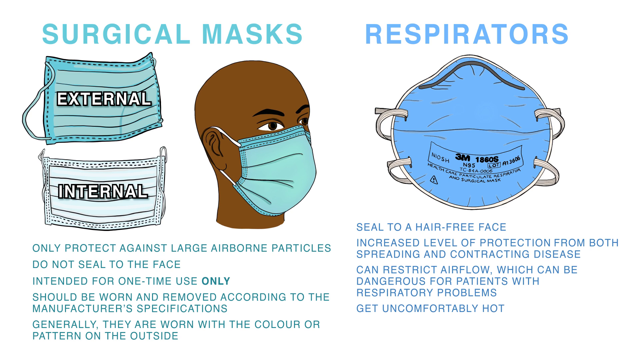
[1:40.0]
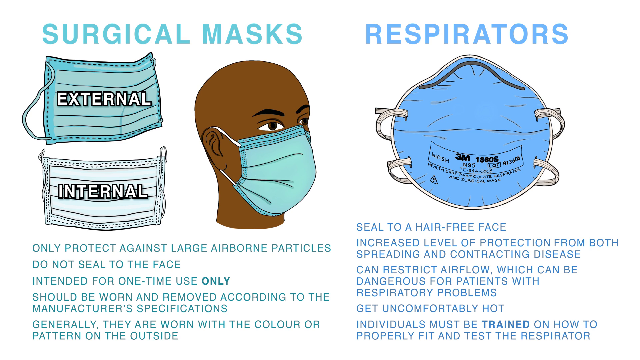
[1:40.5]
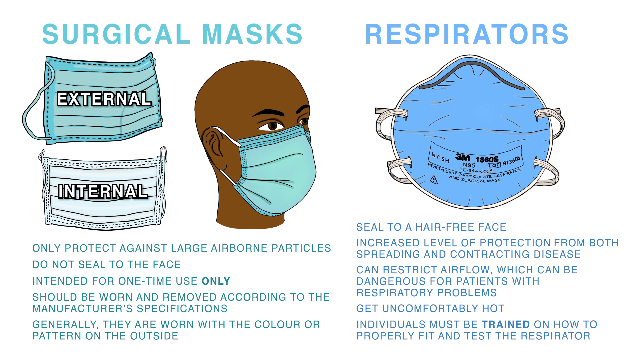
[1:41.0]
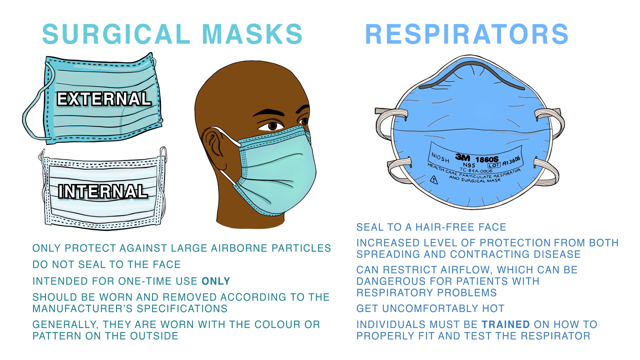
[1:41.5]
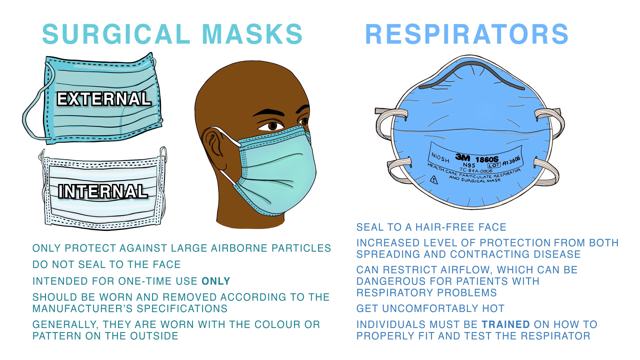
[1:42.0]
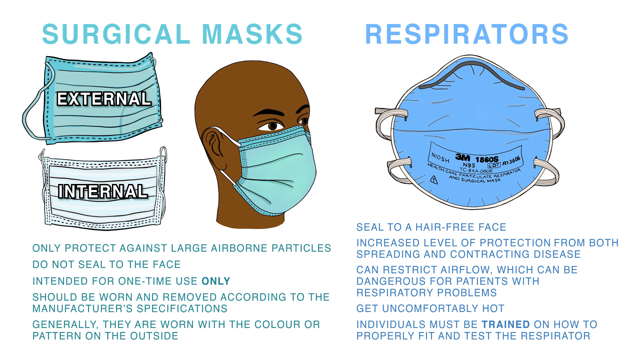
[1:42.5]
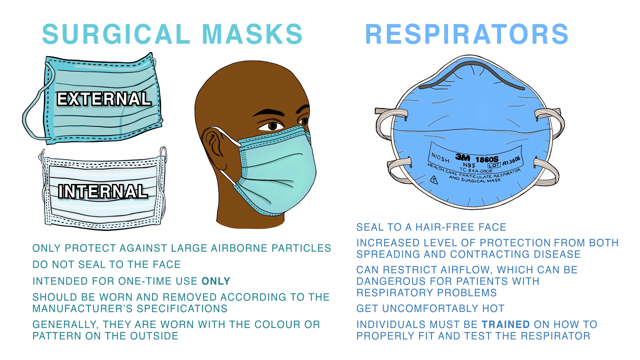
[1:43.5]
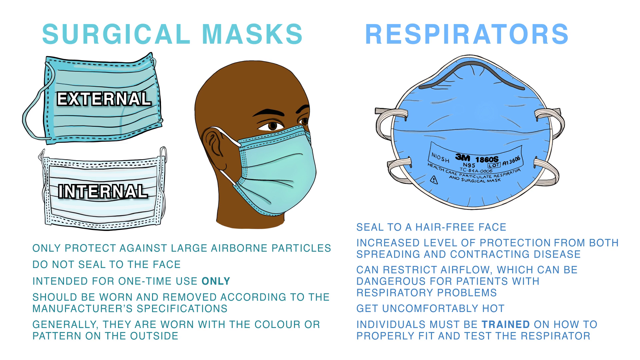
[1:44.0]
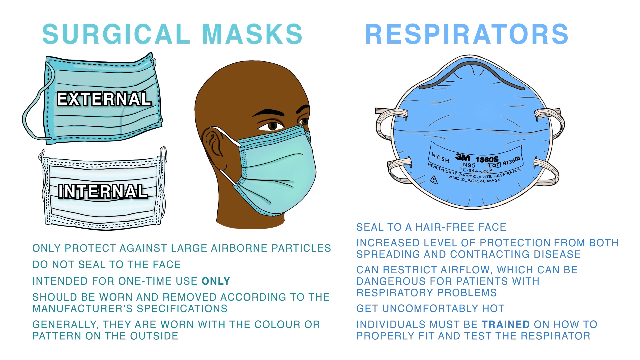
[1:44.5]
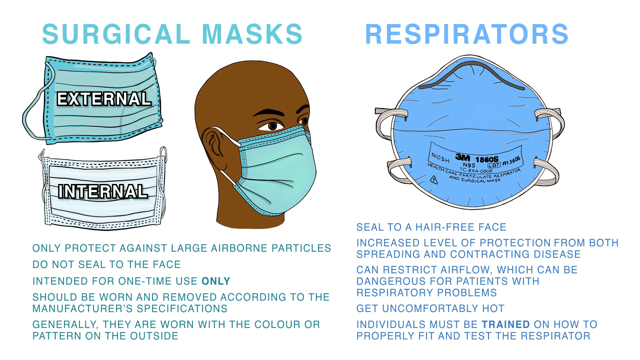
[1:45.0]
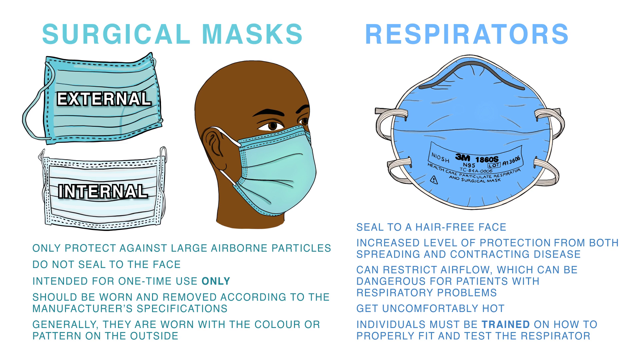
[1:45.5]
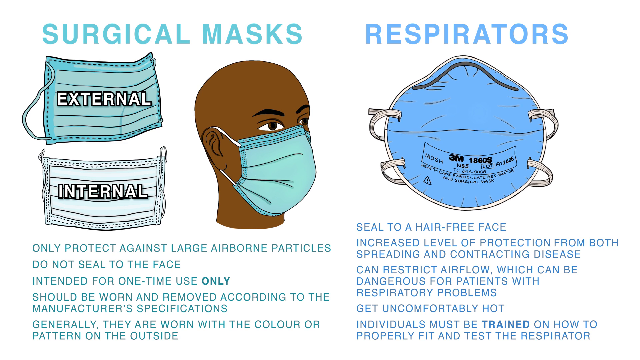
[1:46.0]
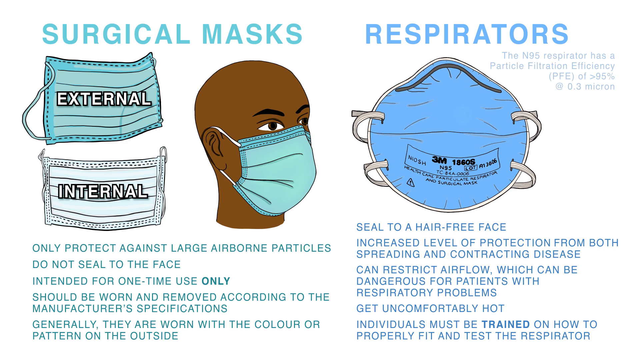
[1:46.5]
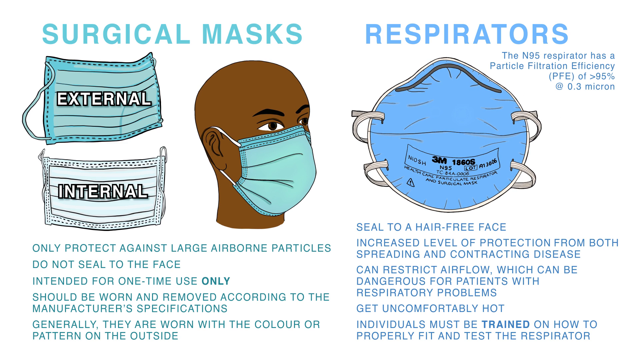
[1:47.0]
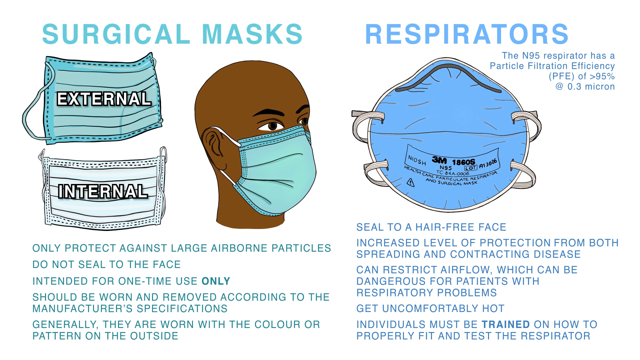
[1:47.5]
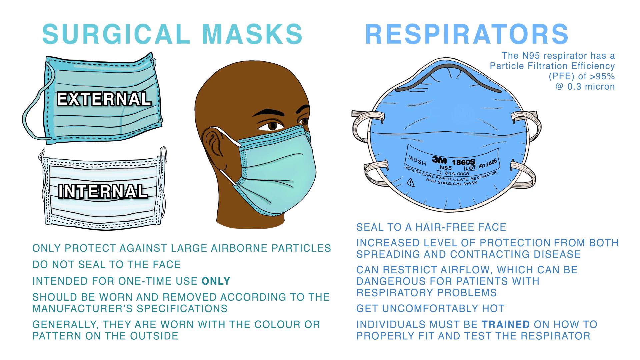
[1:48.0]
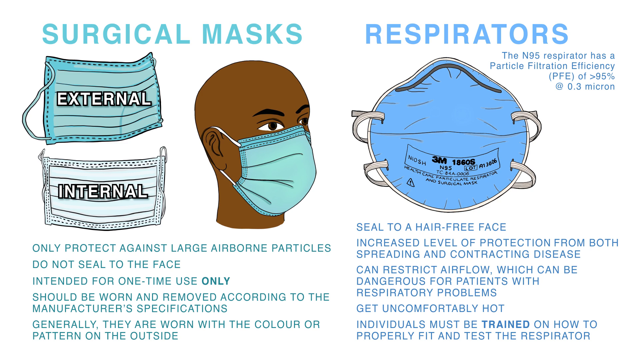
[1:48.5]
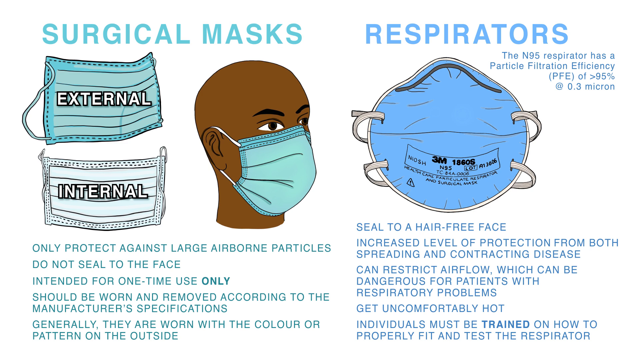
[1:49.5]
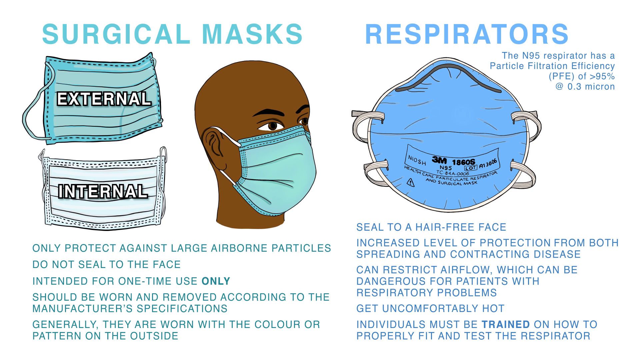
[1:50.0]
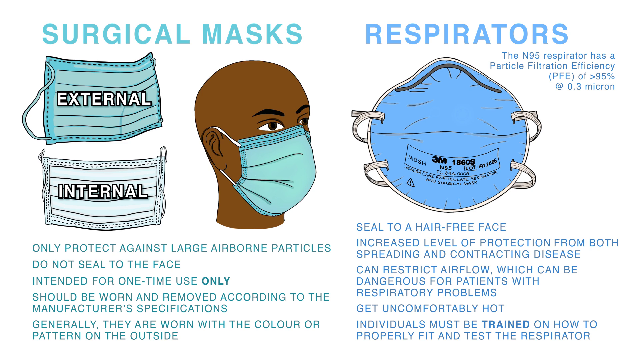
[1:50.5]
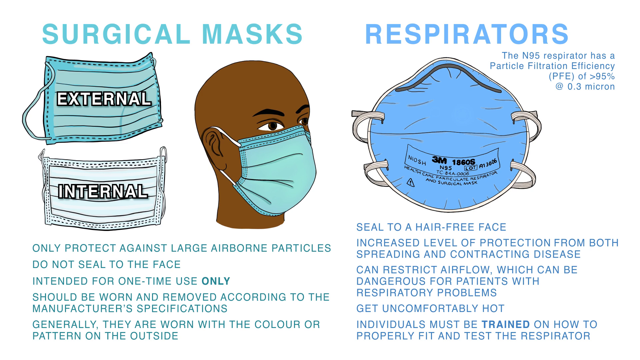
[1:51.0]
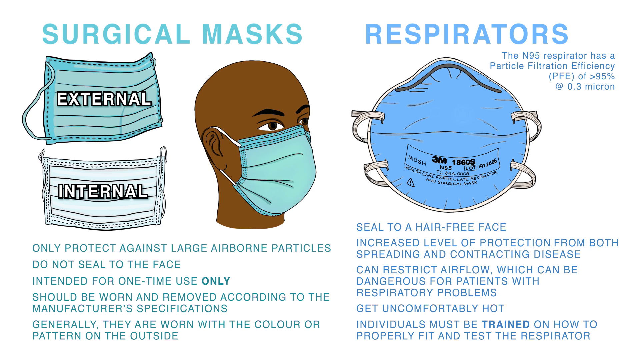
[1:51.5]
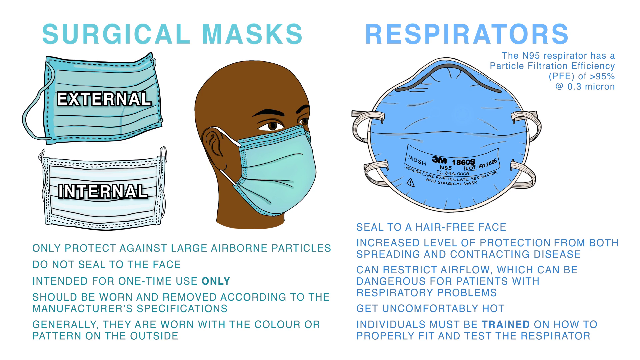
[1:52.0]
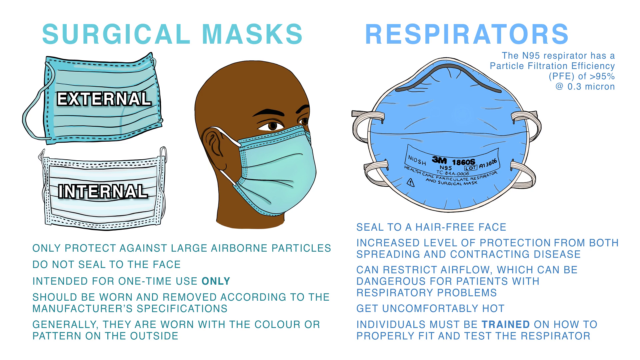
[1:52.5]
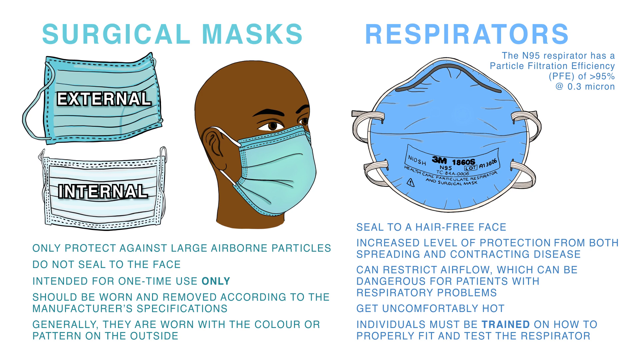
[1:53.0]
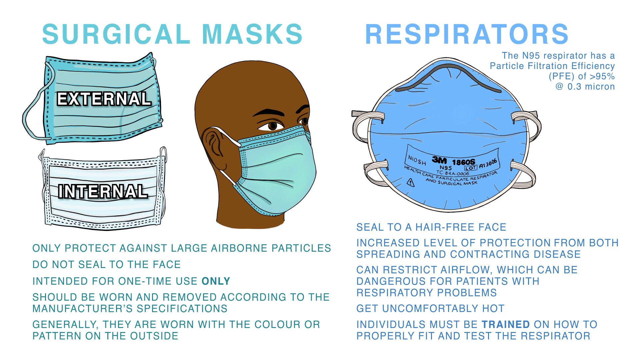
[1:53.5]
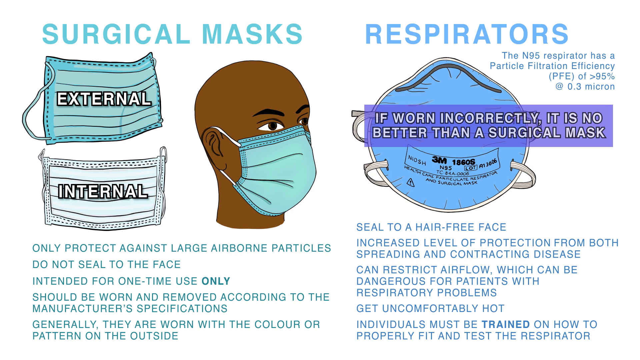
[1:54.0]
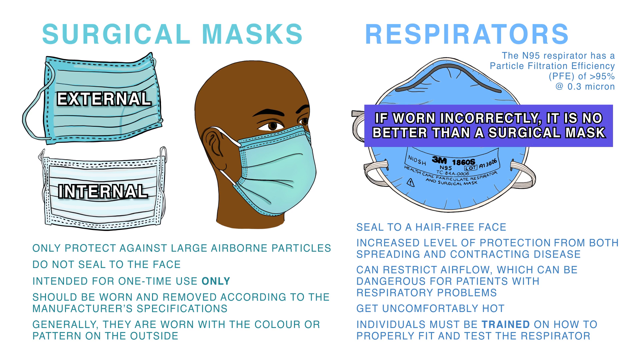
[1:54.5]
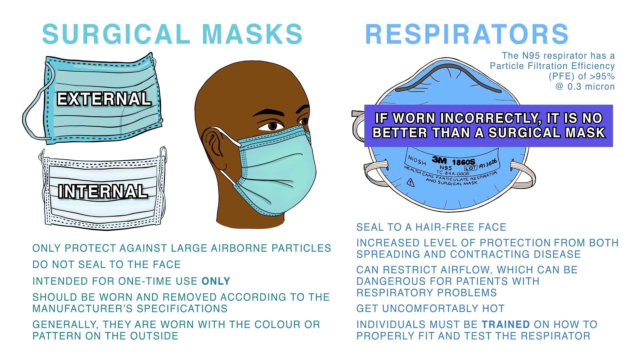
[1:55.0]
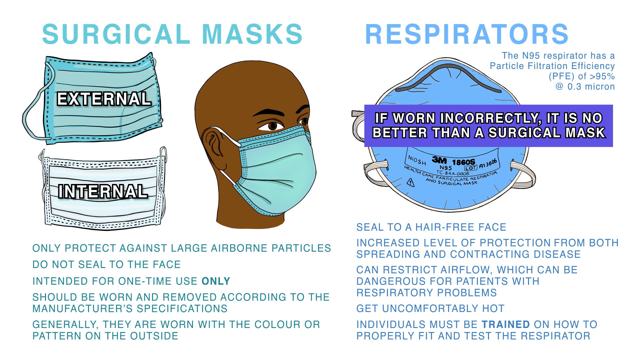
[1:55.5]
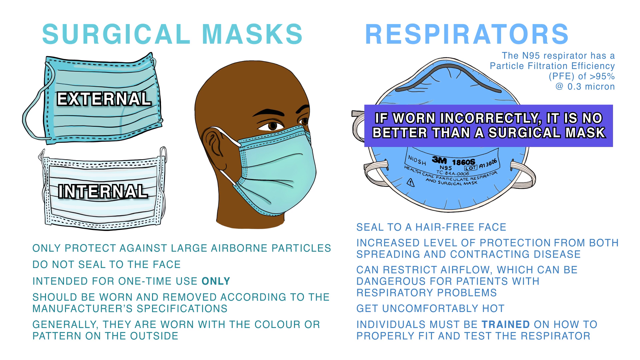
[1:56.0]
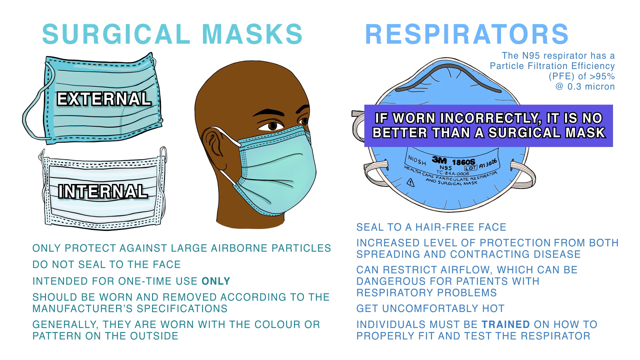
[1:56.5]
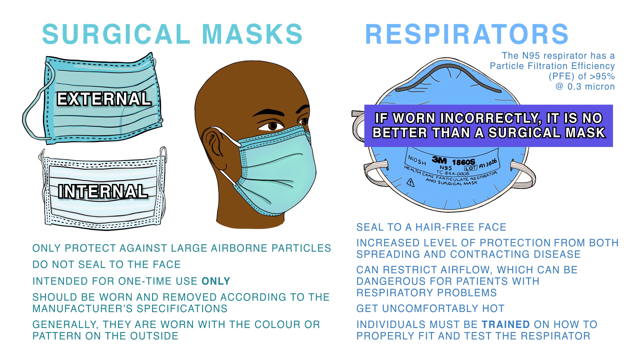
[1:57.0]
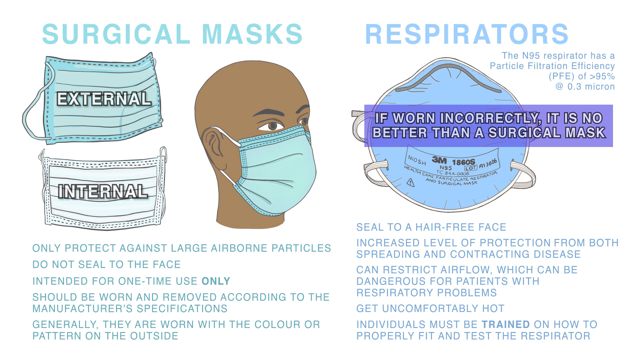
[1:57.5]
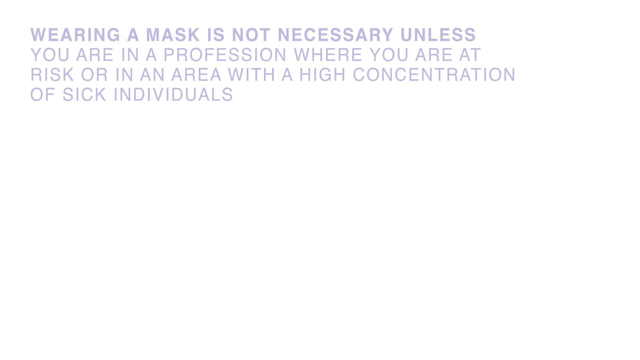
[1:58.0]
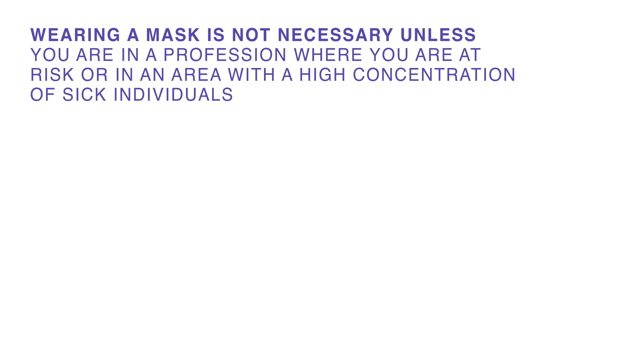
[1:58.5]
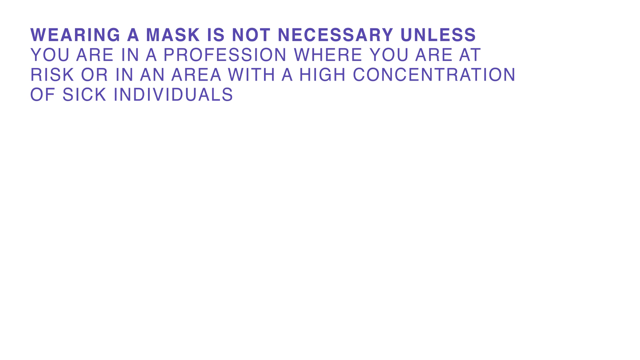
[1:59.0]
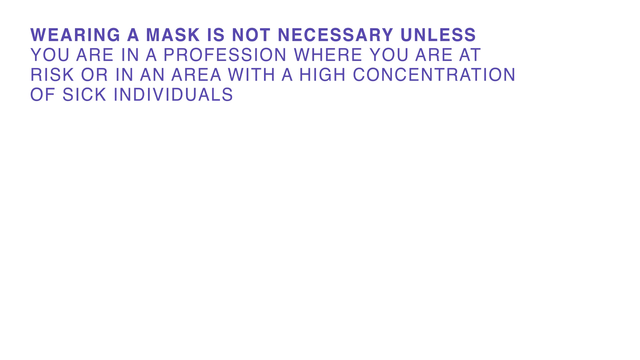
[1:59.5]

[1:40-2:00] Images show surgical masks, drawings of the face of a person wearing a surgical mask, and a respirator. Text beneath the images describes the protection level of the product, what it restricts, how it should be sealed, how many uses it offers, and that it is disposable. Other text tells how efficient the respirator is and about its filtration. An image shows the head of a person with brown skin and a bald head, with a light green surgical mask on the nose and mouth. A box with text pops up over the image of the respirator and reads "if worn incorrectly, it is no better than a surgical mask." The video transitions to a white screen with purple text that reads "wearing a mask is not necessary unless you're in a profession where you are at risk or in an area with a high concentration of sick individuals."